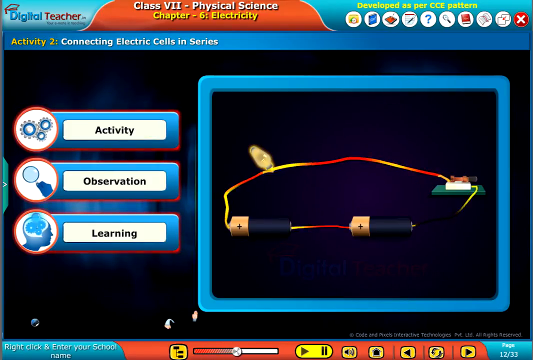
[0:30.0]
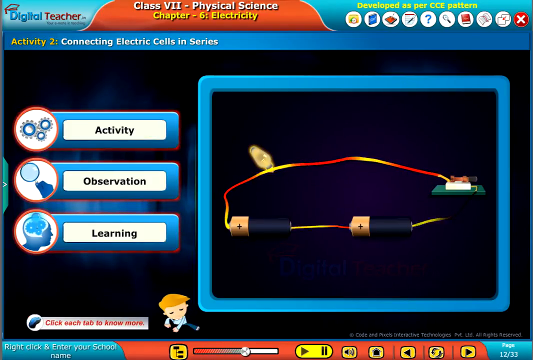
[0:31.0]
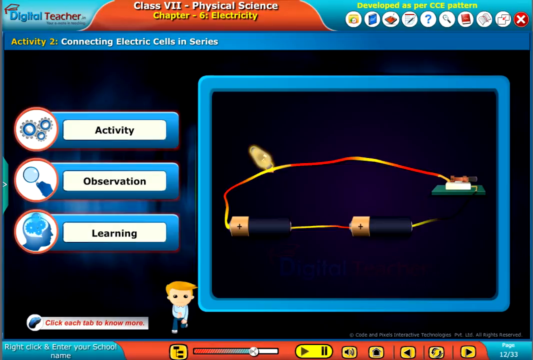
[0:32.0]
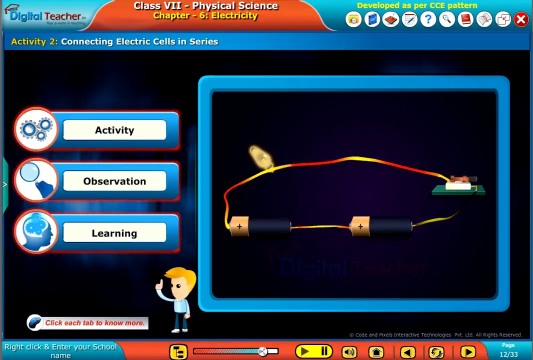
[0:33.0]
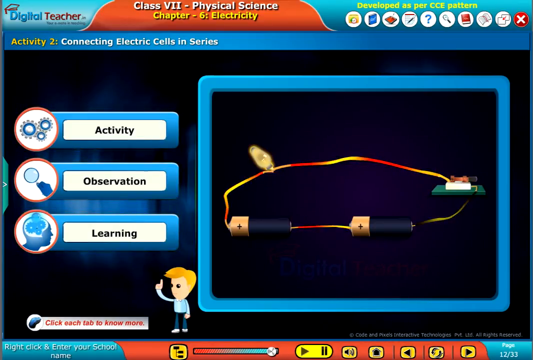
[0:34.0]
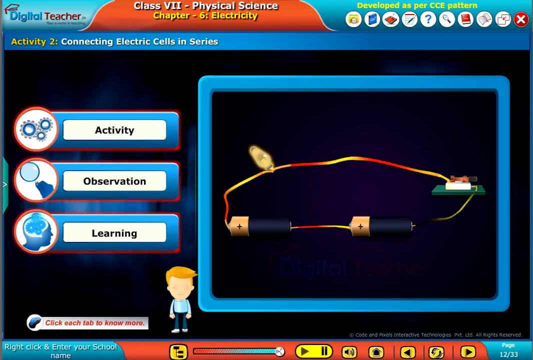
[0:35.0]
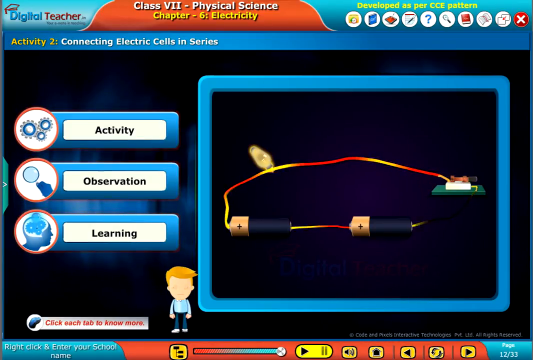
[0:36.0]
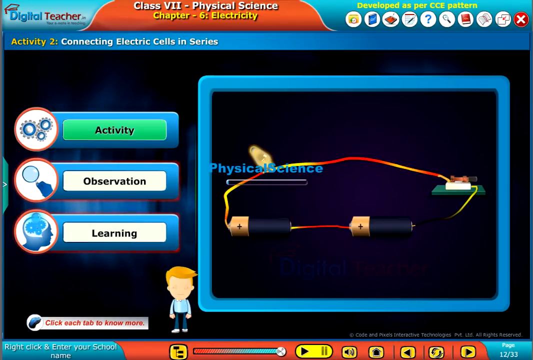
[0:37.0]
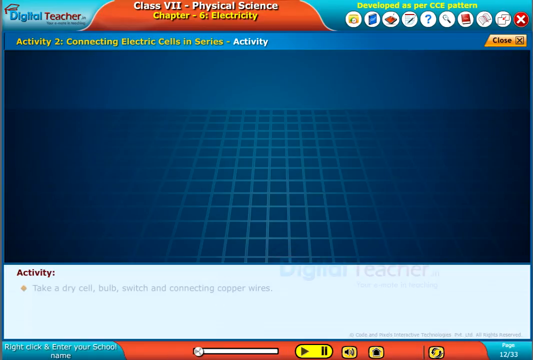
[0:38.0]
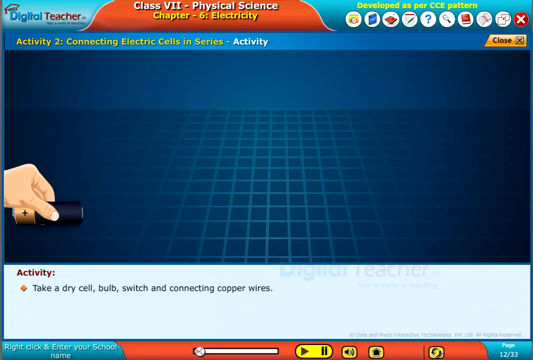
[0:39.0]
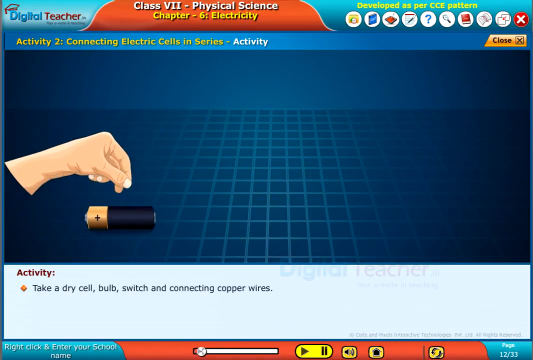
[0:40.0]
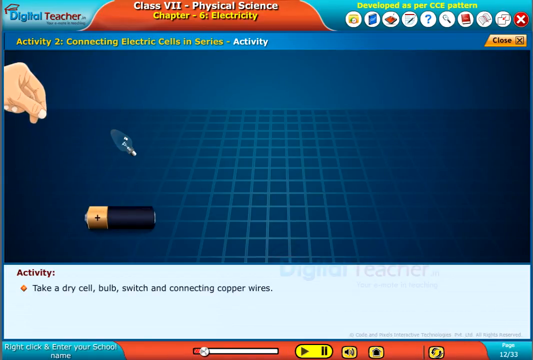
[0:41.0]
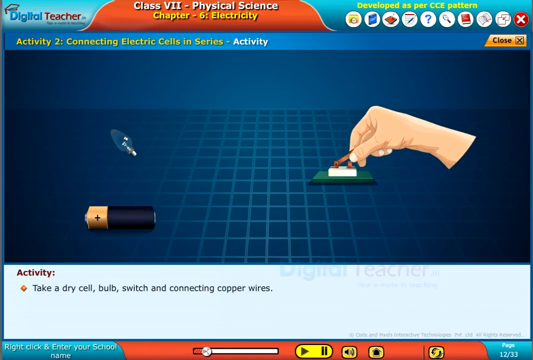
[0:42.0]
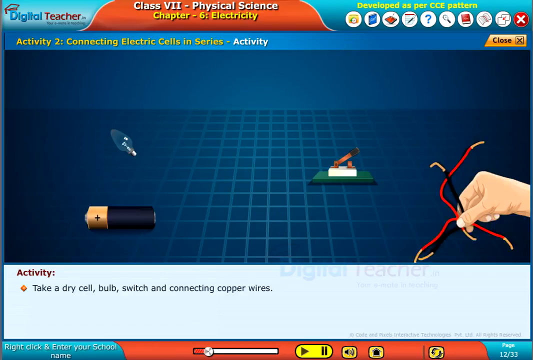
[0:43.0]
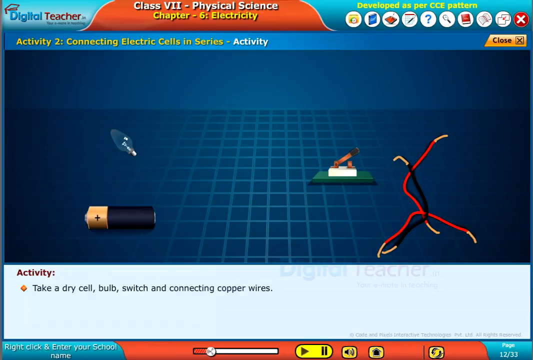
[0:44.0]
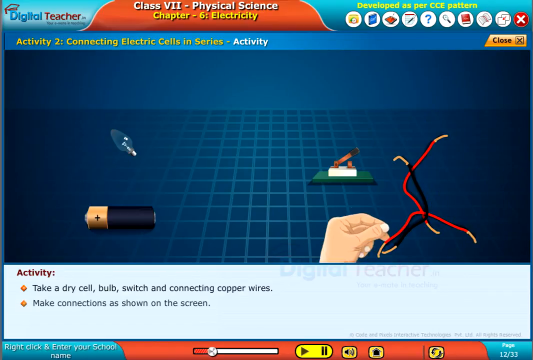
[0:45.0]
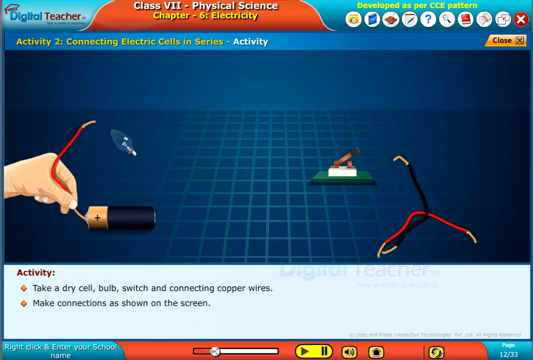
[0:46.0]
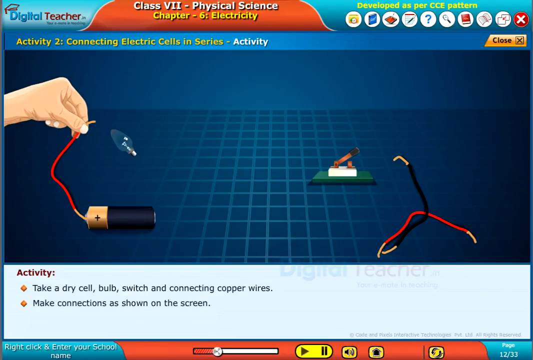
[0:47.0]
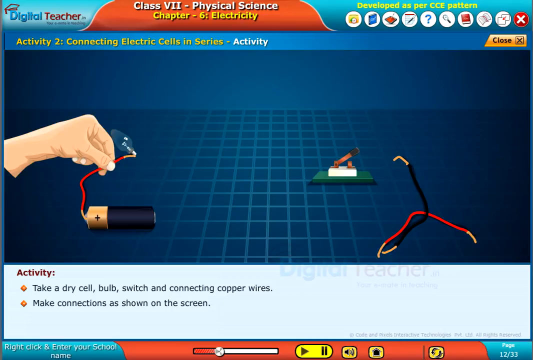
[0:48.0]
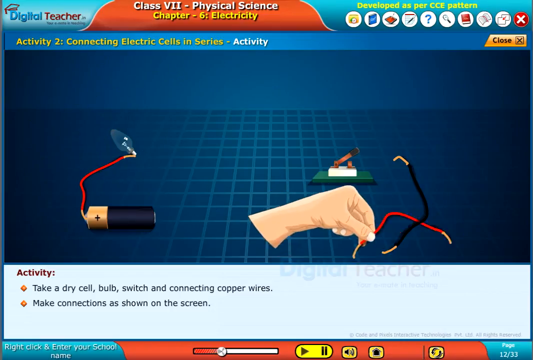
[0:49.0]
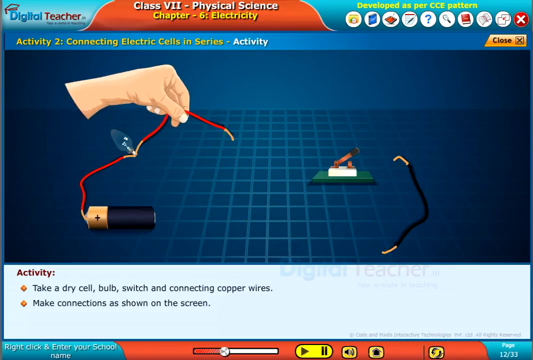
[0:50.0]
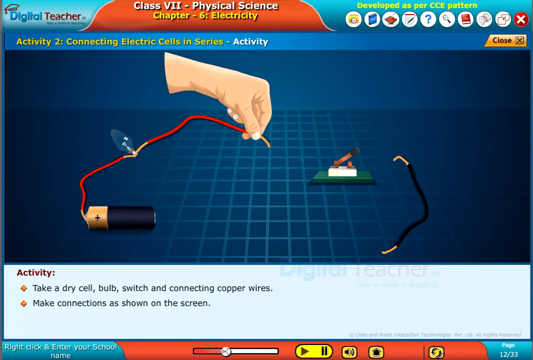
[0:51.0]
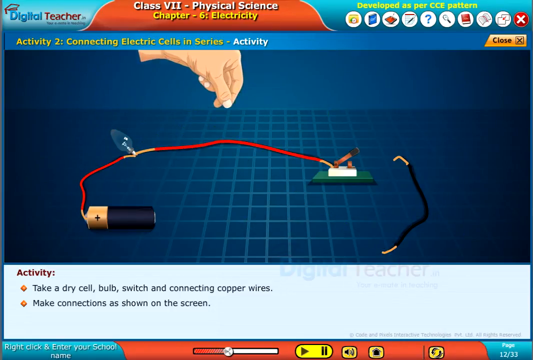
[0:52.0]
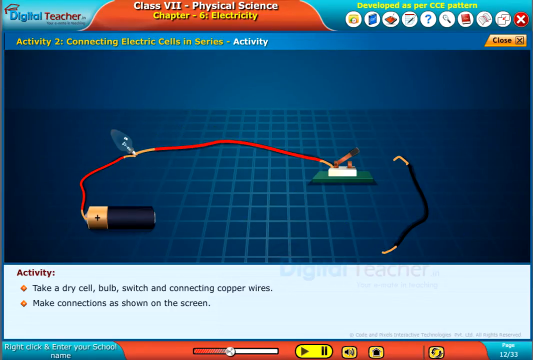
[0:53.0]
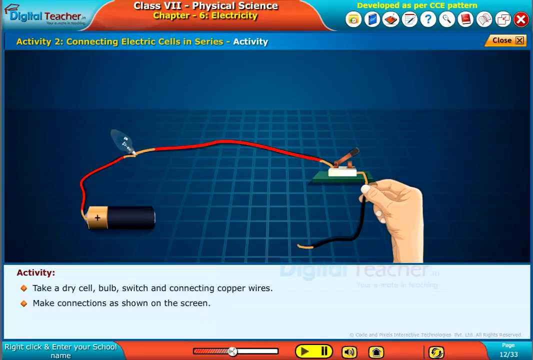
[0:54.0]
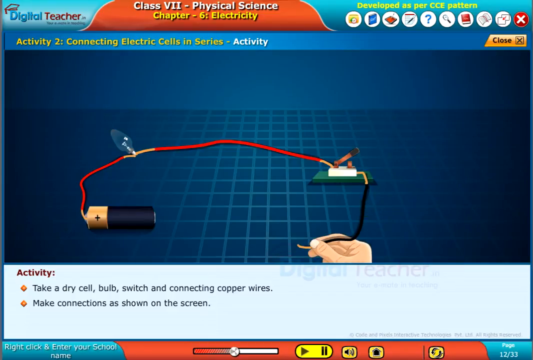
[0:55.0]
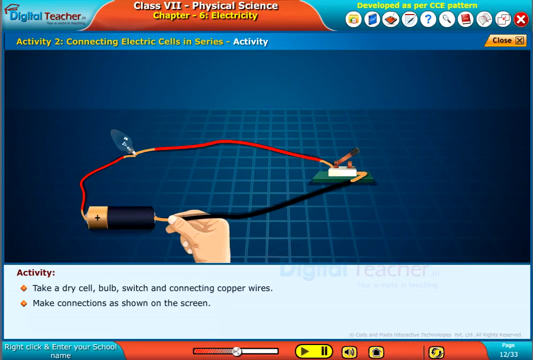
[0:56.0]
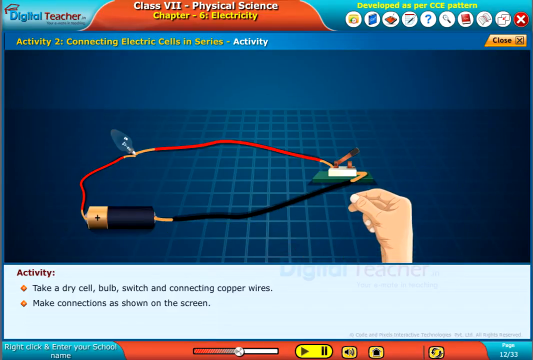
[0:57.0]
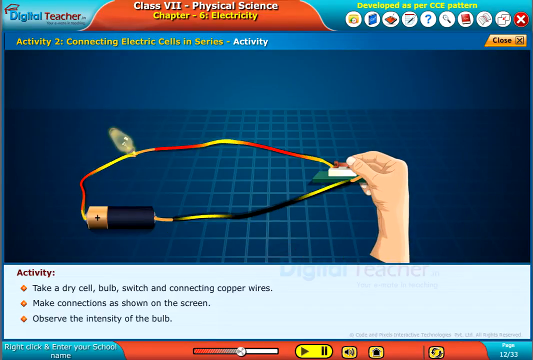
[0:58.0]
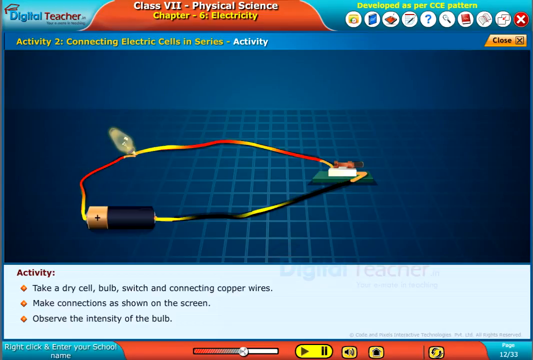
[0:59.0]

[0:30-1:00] On the circuit battery screen, the same tab appears at the top showing the topic: "class 7, physical science", and beneath it in yellow "chapter 6" and "electricity". Right beneath that it says "activity 2, connecting electric cells in series". The right side of the screen is covered by a box with the circuit: two batteries at the bottom of the circuit and a red and yellow wire connecting to a green and white switch. To the left are three tabs, each with a circle showing an image: "activity" with some cogs, "observation" with a magnifying glass, and a third with a blue human silhouette face with the brain highlighted. The circuit is going around. At the bottom of the screen is a little tutorial guide, a human. The screen then switches to one where a cartoon hand puts the system in place, showing all the objects and the different wires. It connects the wires to the light bulb, then to the switch, then to the battery; there is just one battery this time. A description in white at the bottom begins "activity, take a dry cell, bulb, switch" and explains what to do.